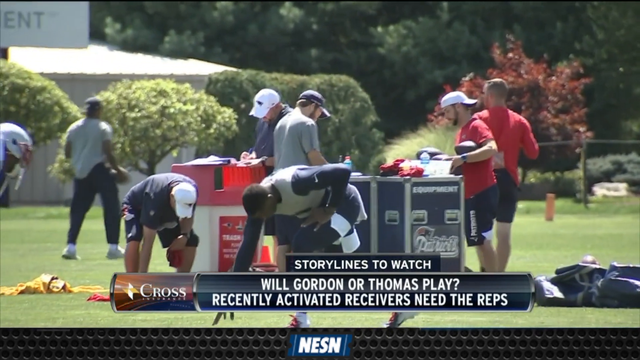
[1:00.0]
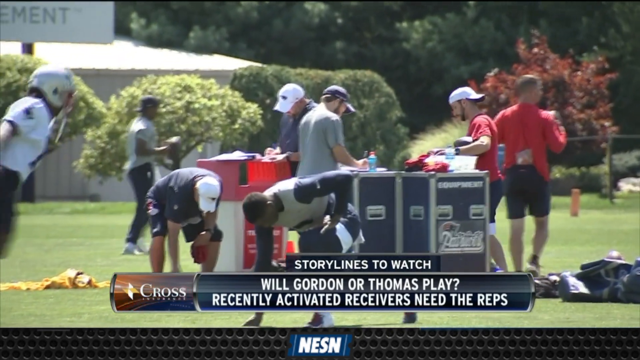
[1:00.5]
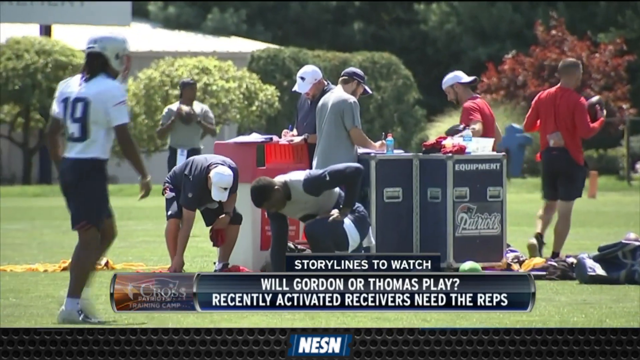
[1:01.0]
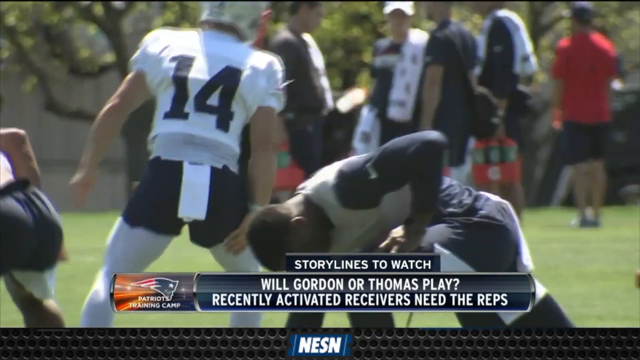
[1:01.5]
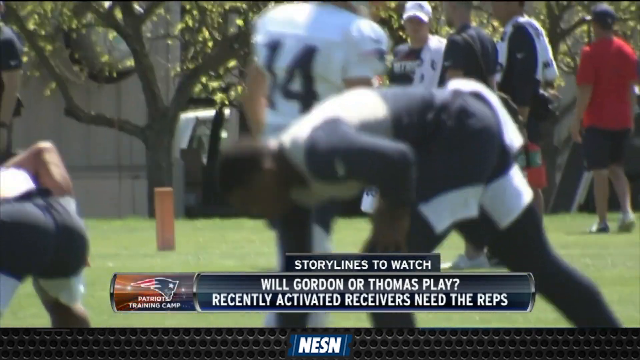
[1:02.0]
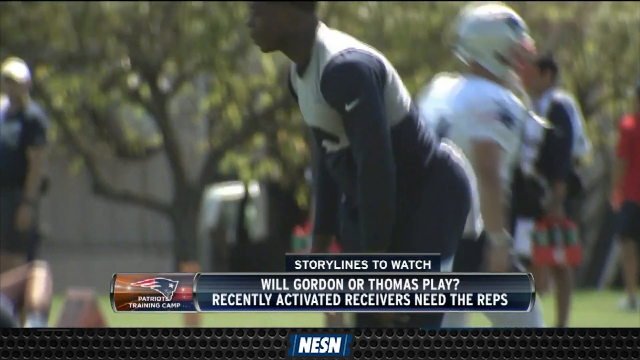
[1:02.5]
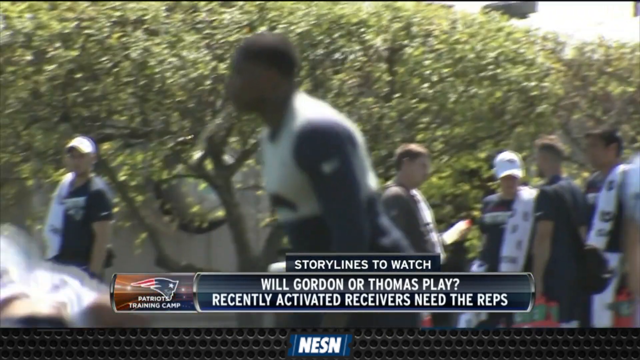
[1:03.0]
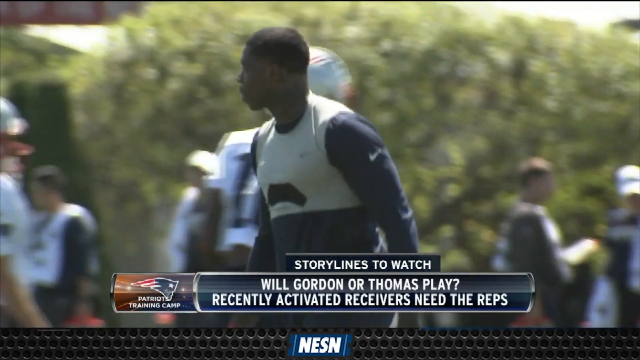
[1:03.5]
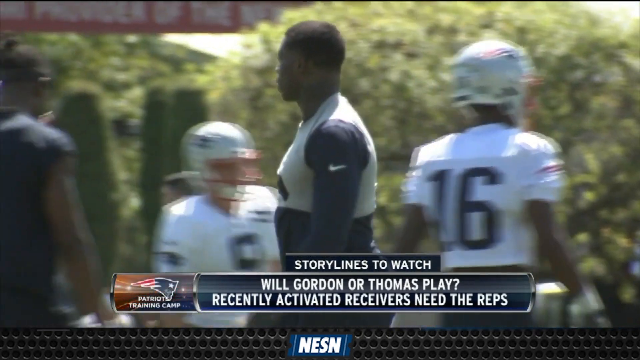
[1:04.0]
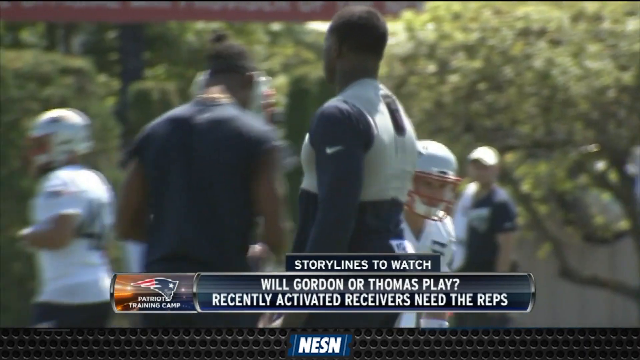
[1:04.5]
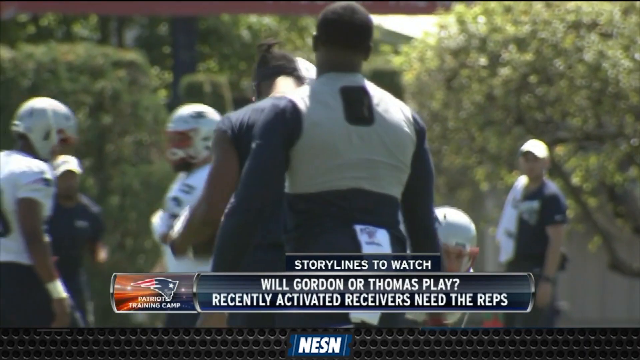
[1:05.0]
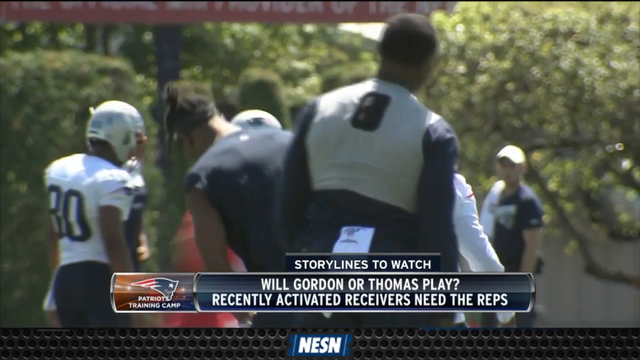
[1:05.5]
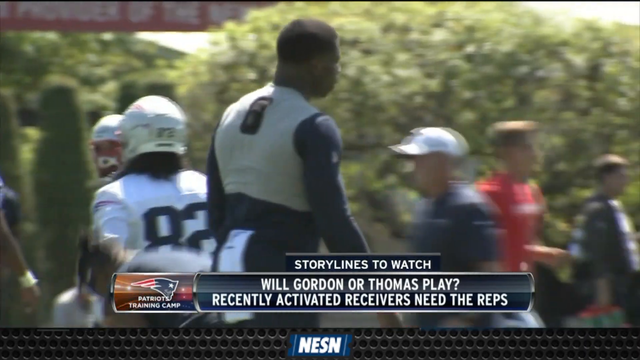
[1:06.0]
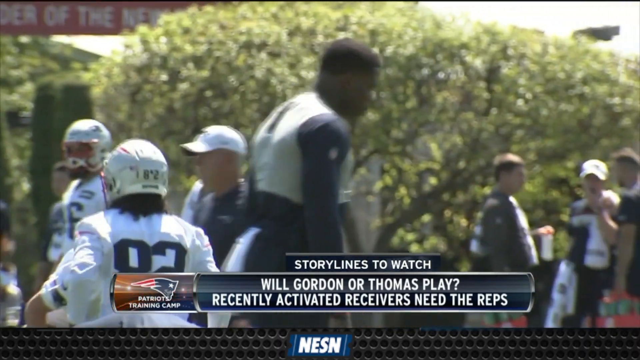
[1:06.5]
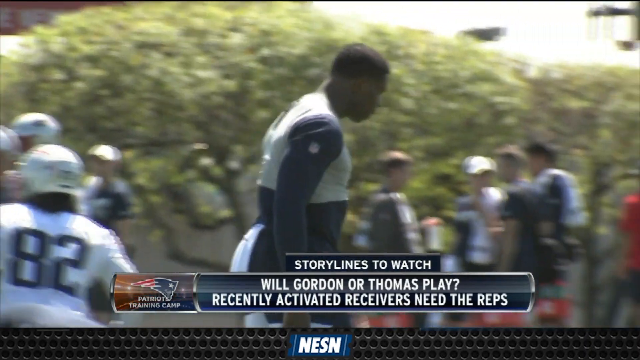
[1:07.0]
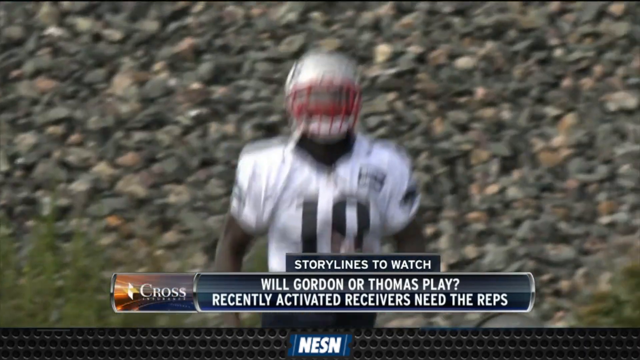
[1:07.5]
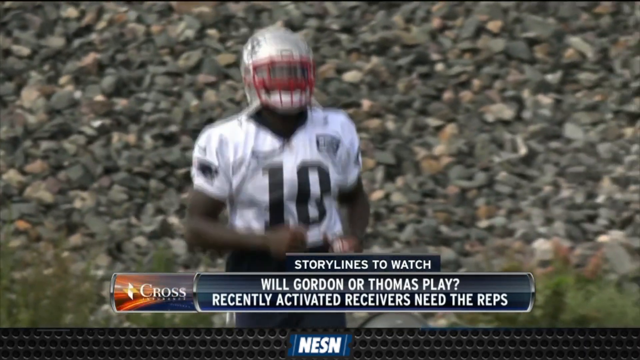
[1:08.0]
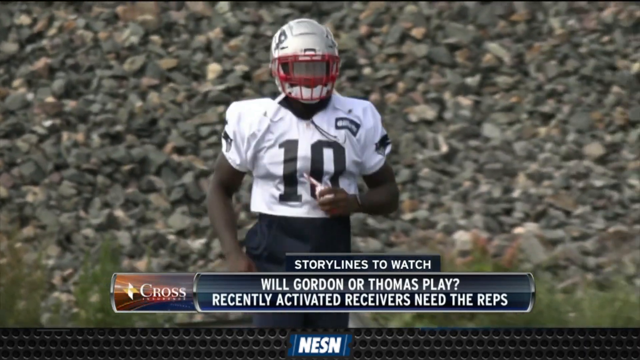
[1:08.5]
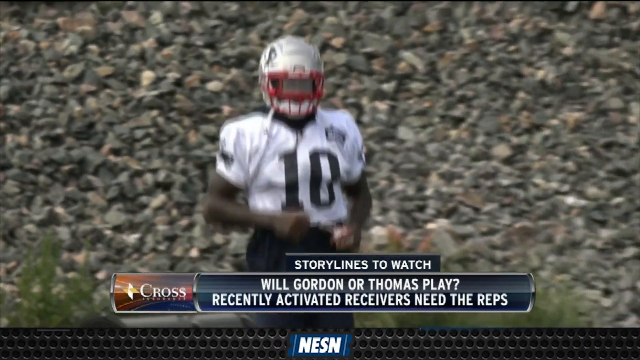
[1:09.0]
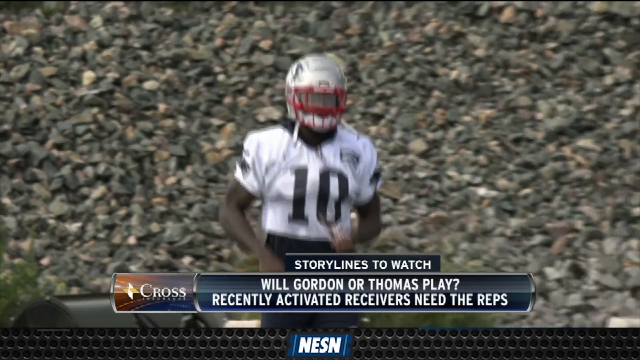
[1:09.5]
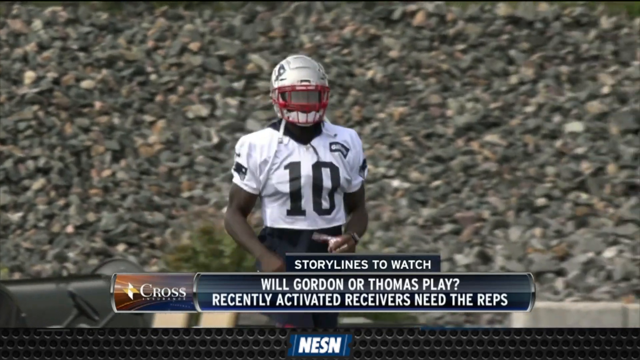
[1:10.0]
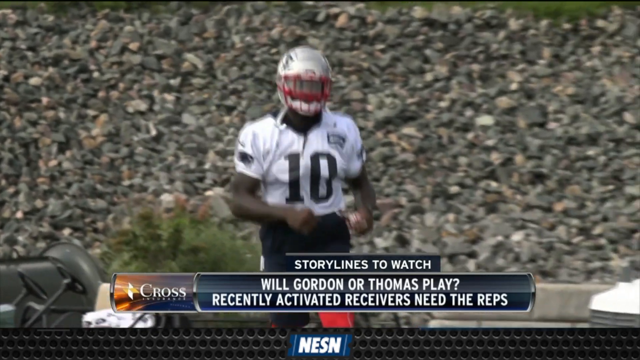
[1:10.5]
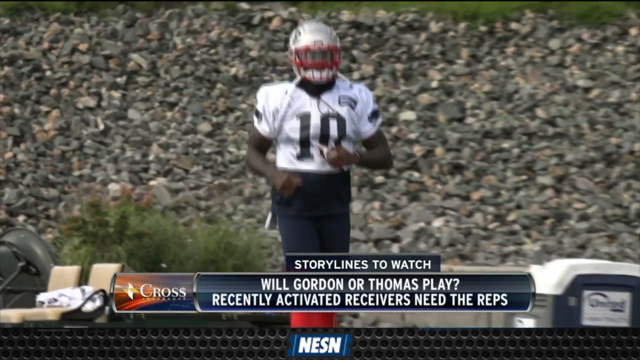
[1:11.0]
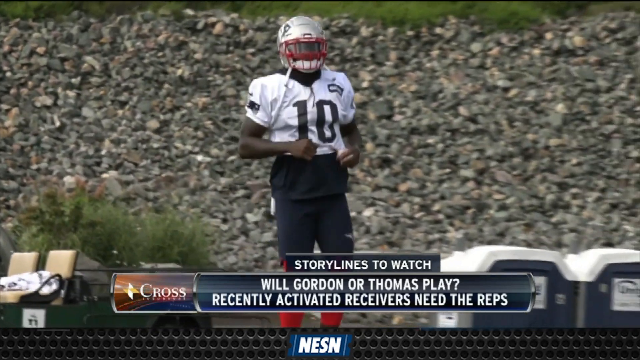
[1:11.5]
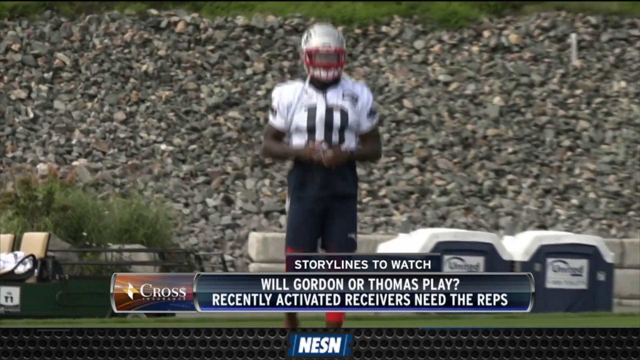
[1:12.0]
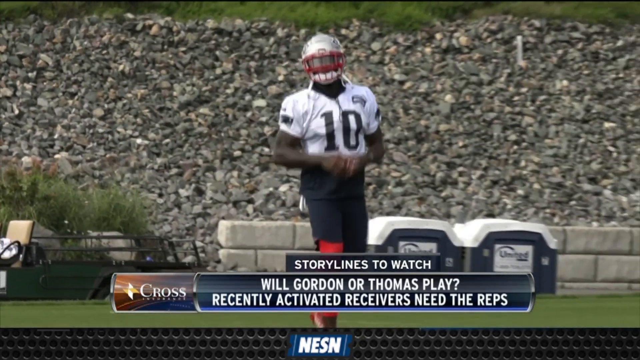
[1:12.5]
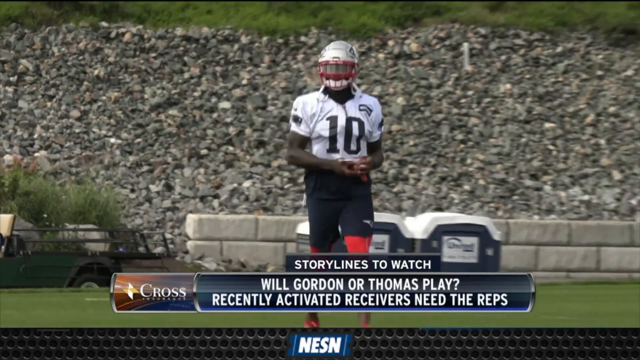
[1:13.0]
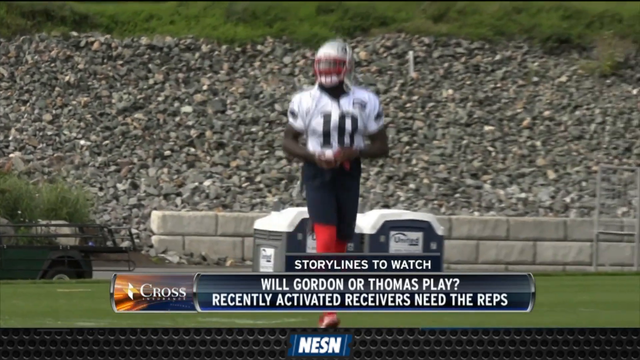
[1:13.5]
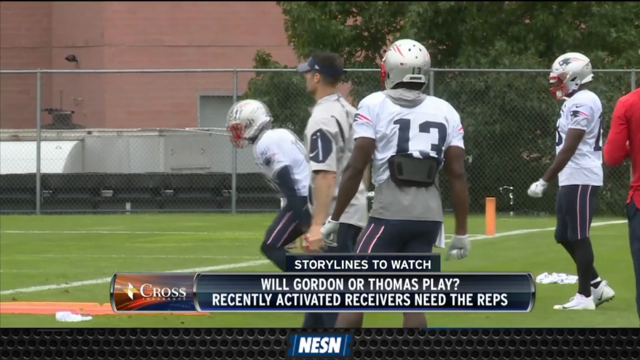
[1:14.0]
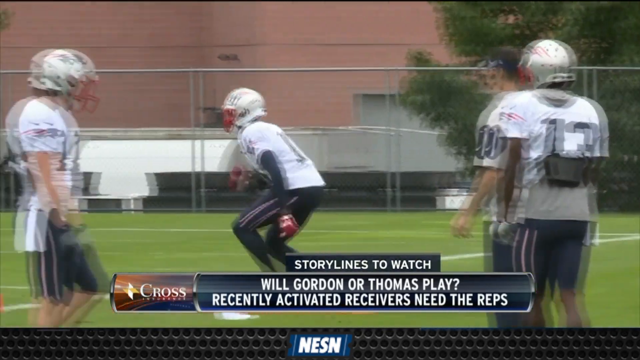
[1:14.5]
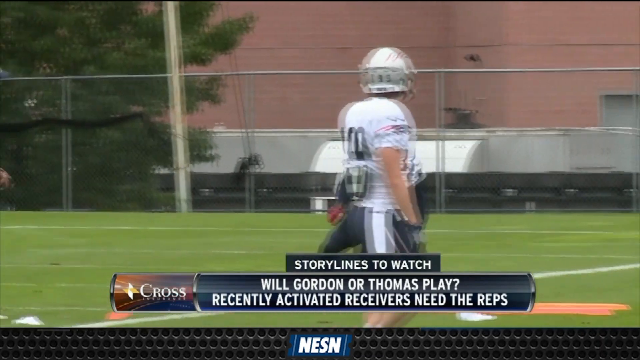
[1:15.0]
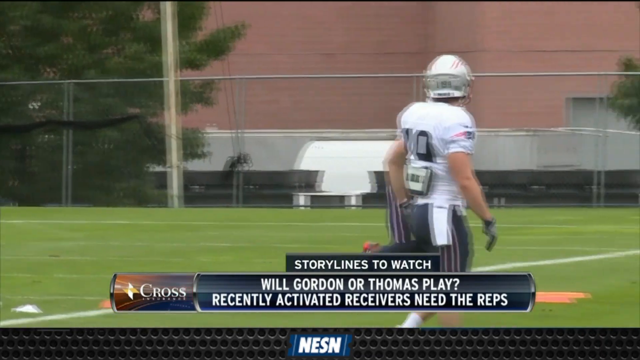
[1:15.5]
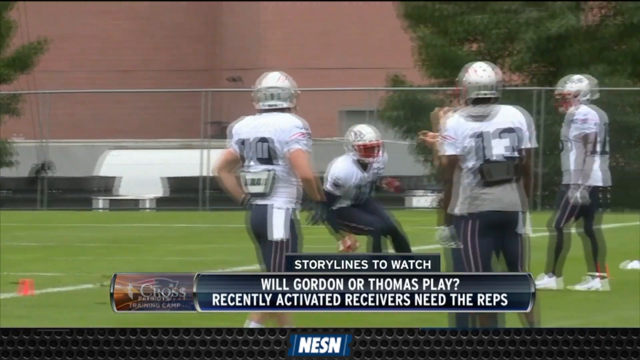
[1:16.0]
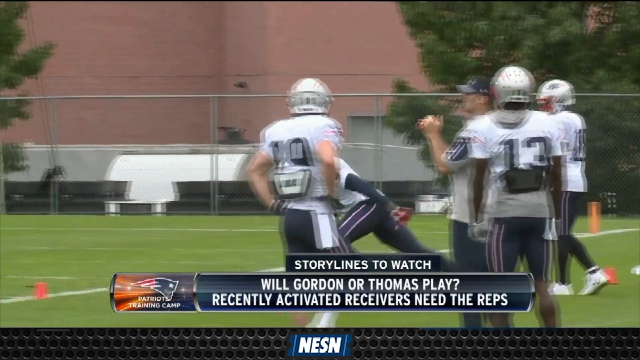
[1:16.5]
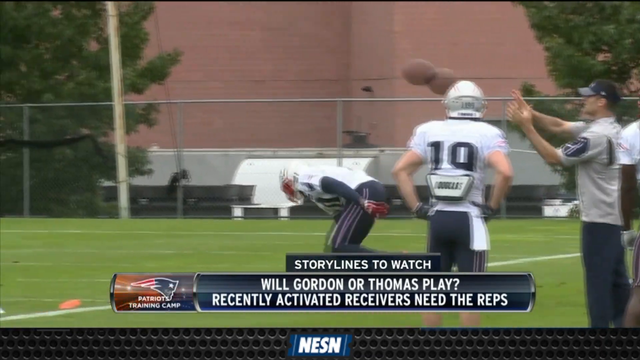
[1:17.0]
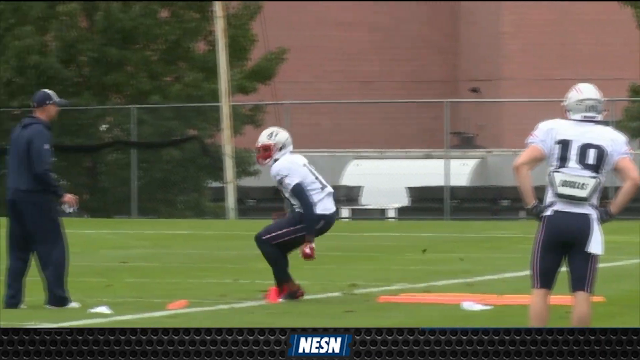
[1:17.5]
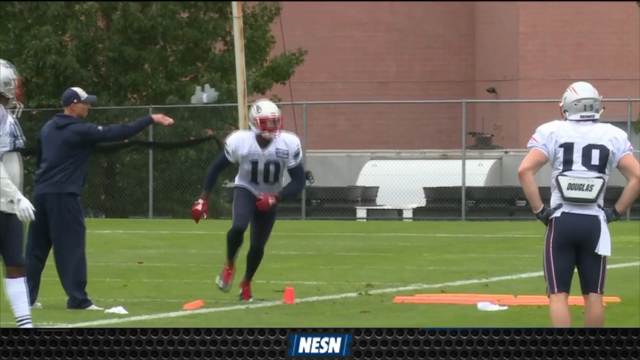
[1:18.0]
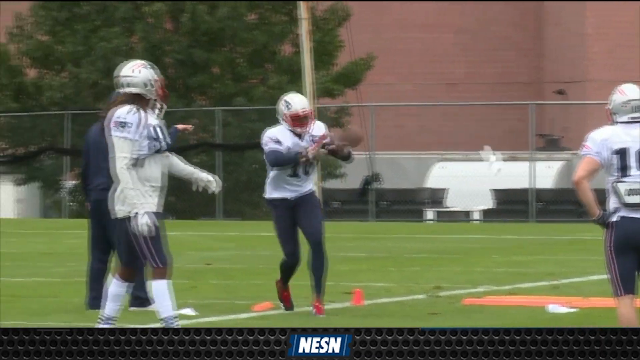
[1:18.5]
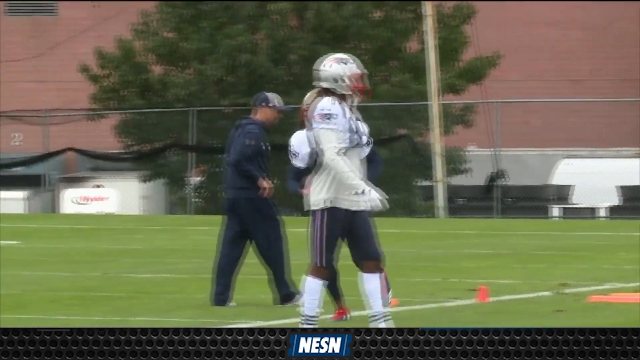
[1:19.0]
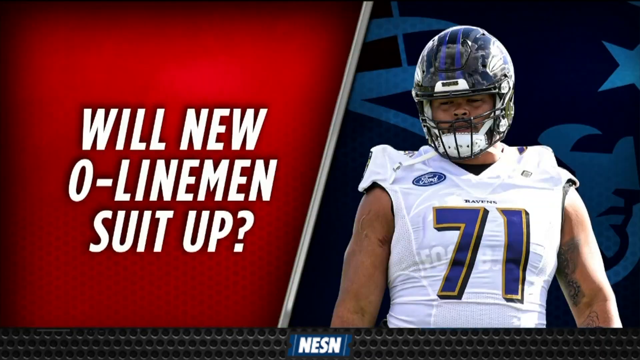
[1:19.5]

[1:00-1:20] Some guys are on the field exercising and running around; they look to be from about 30 to maybe 40 years old. Some wear red T-shirts and caps, some wear navy blue jerseys, and some wear helmets, apparently the kind used for their sport. There are around 15 of them, more or less. Not much changes; everyone is doing their own thing, exercising and running around the field.